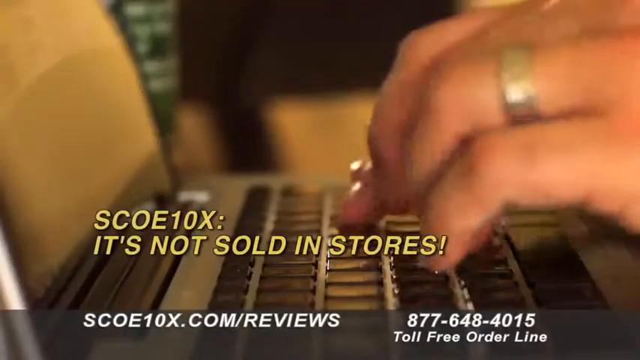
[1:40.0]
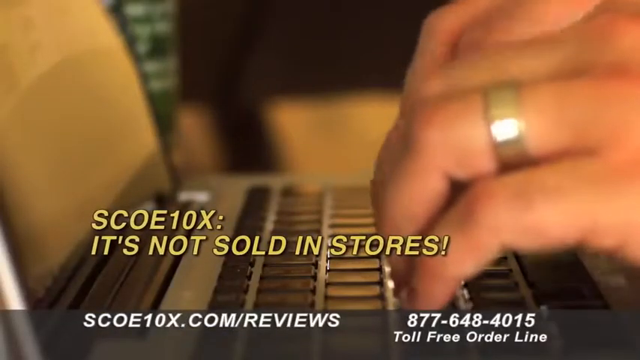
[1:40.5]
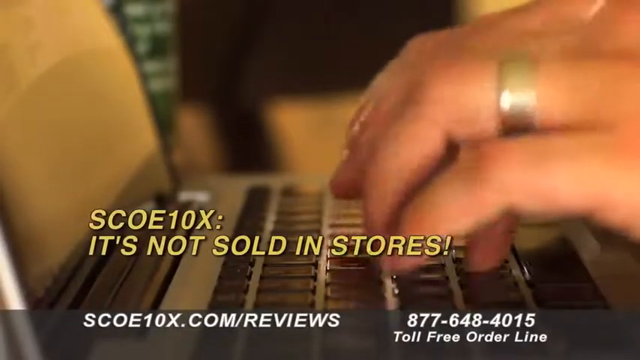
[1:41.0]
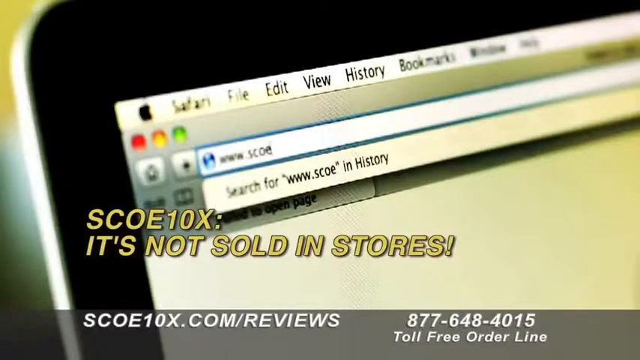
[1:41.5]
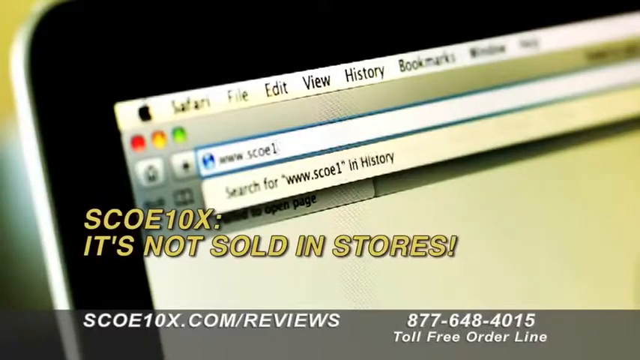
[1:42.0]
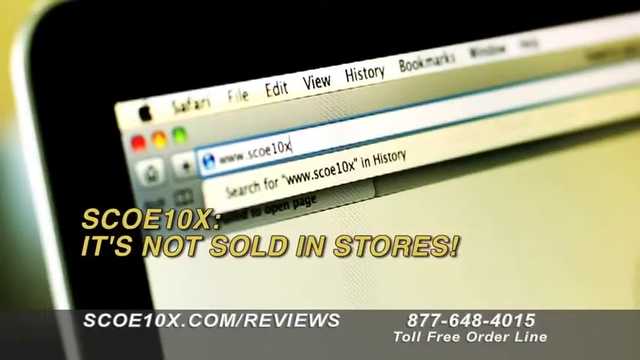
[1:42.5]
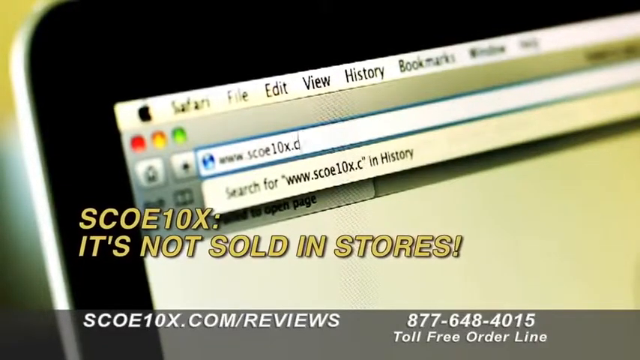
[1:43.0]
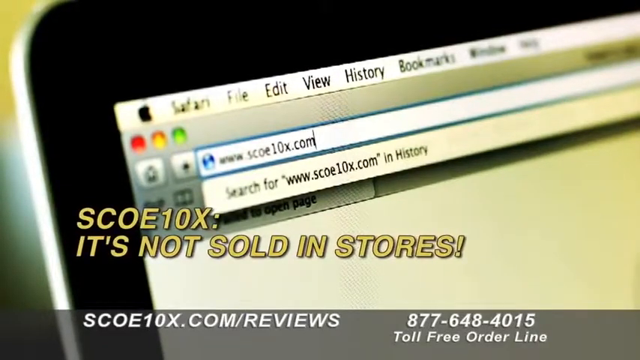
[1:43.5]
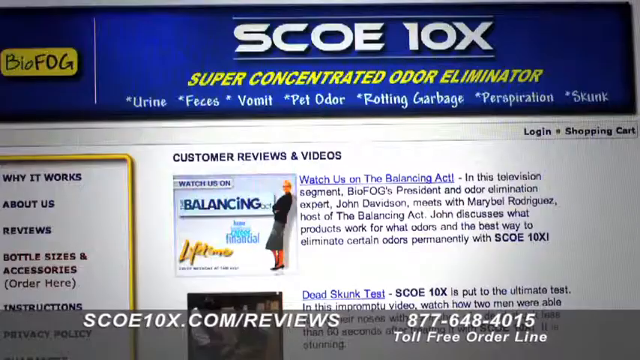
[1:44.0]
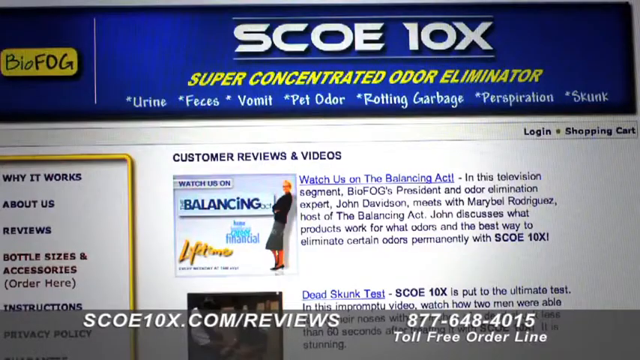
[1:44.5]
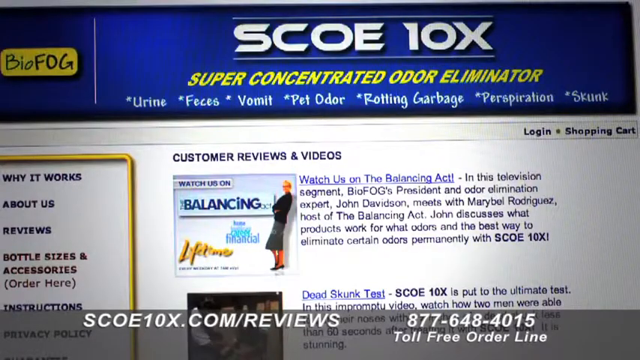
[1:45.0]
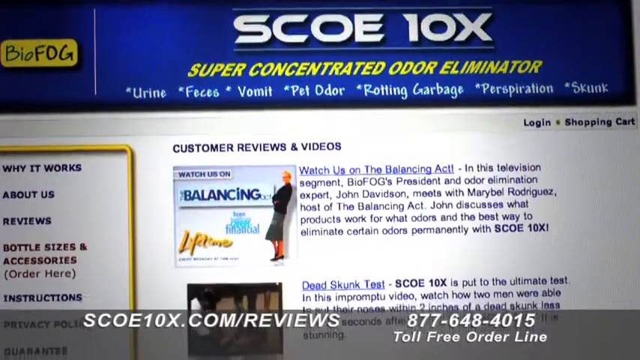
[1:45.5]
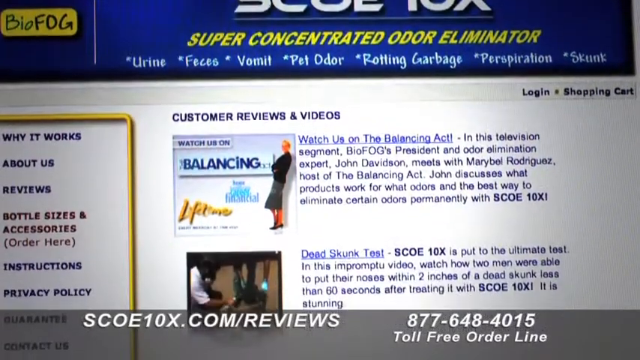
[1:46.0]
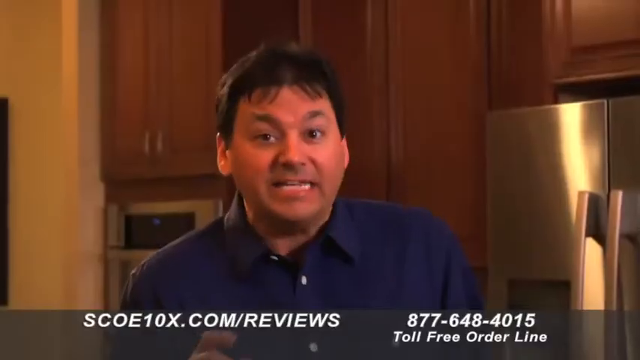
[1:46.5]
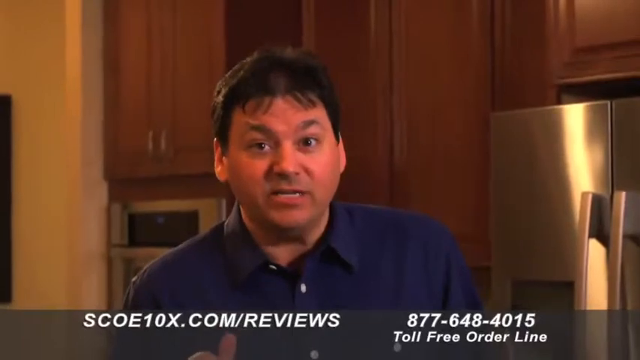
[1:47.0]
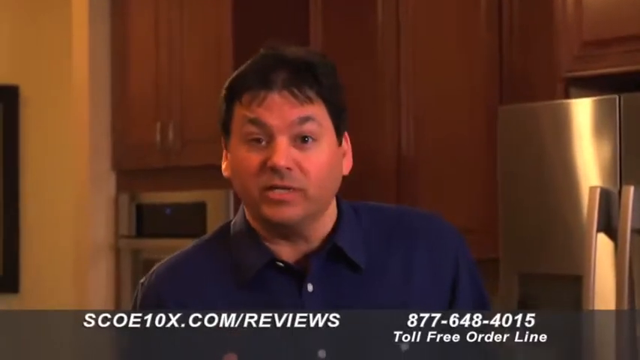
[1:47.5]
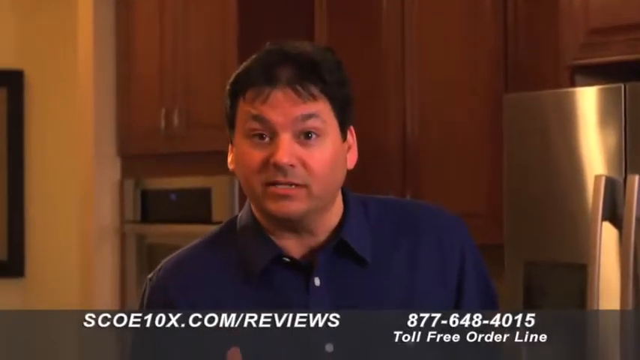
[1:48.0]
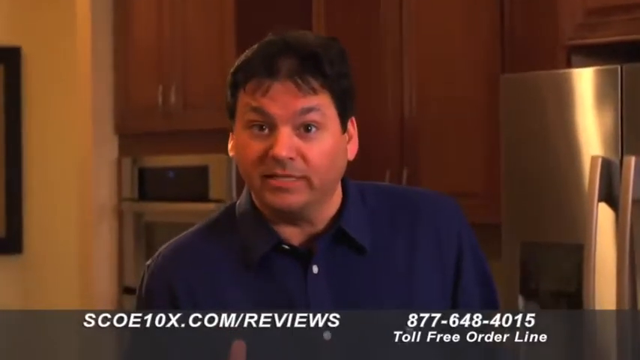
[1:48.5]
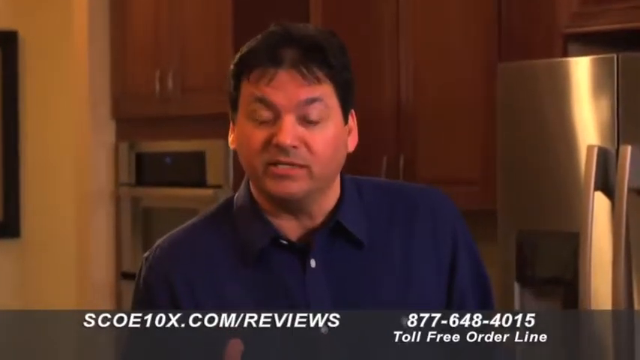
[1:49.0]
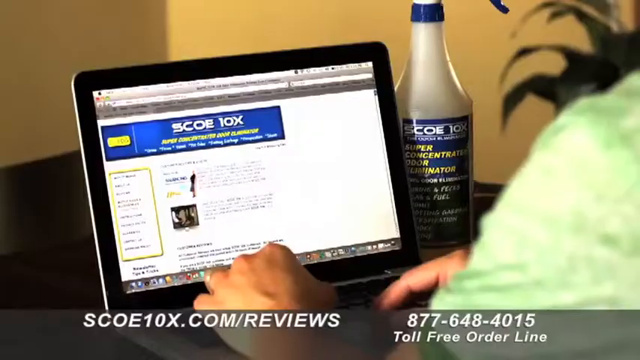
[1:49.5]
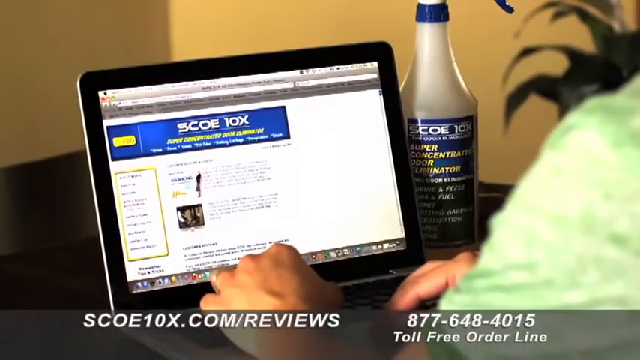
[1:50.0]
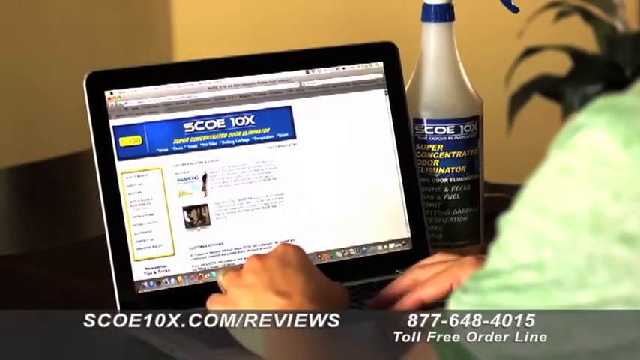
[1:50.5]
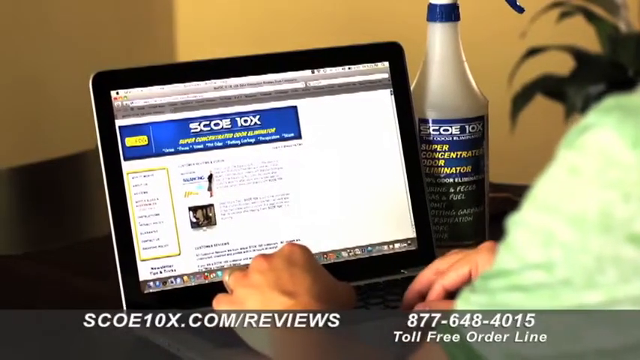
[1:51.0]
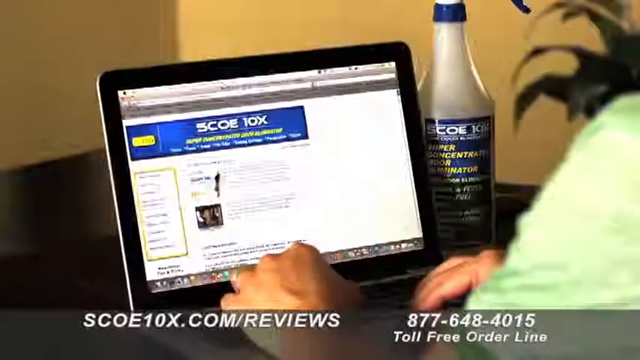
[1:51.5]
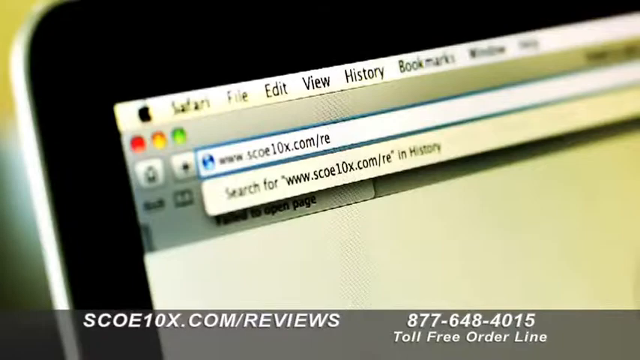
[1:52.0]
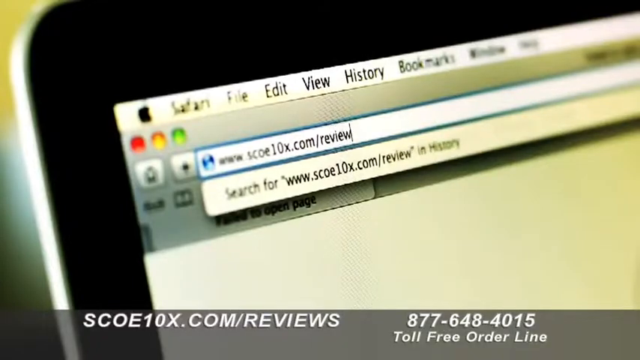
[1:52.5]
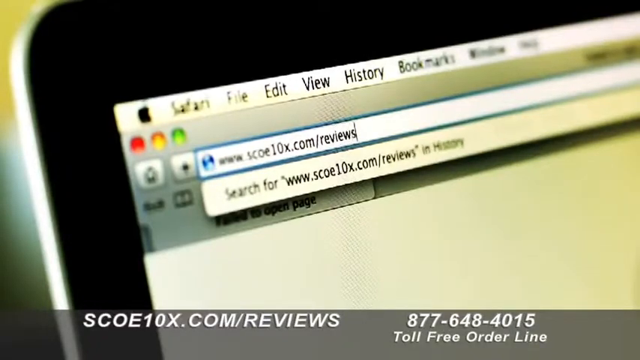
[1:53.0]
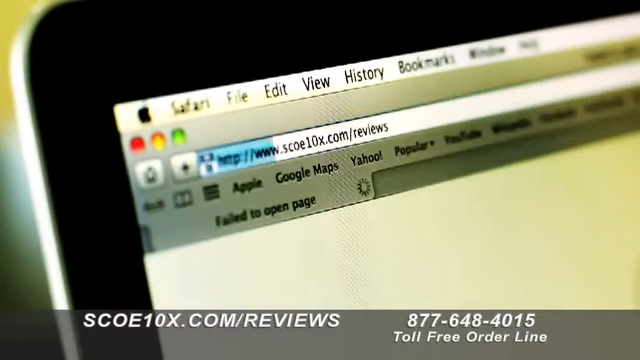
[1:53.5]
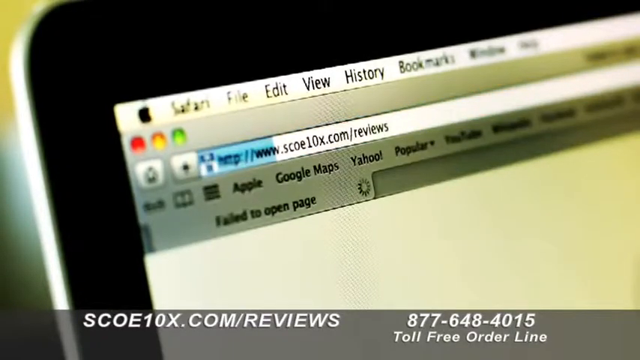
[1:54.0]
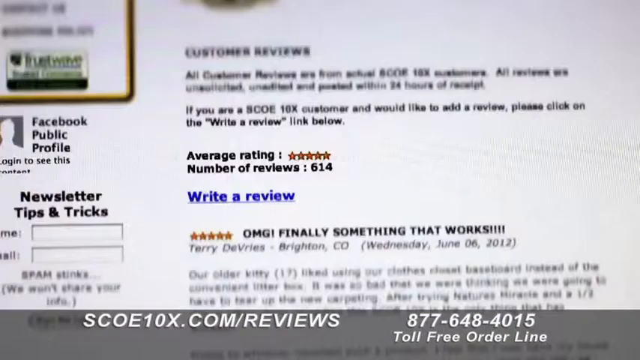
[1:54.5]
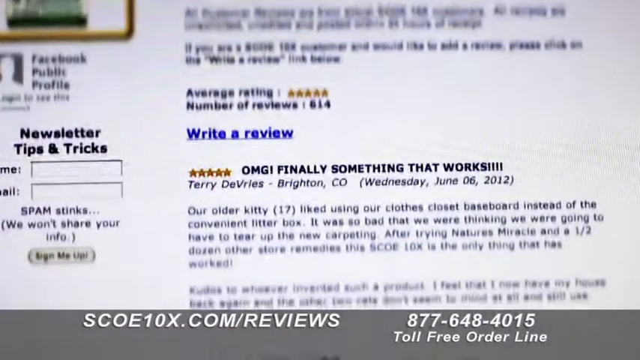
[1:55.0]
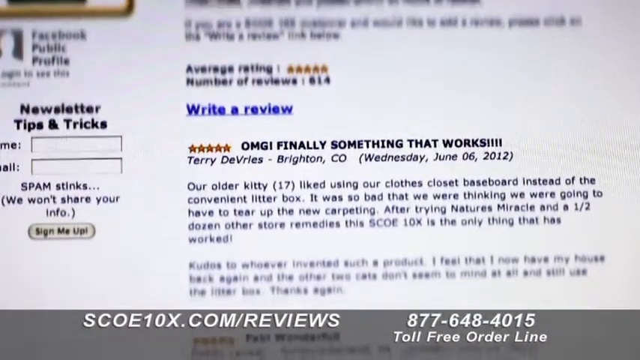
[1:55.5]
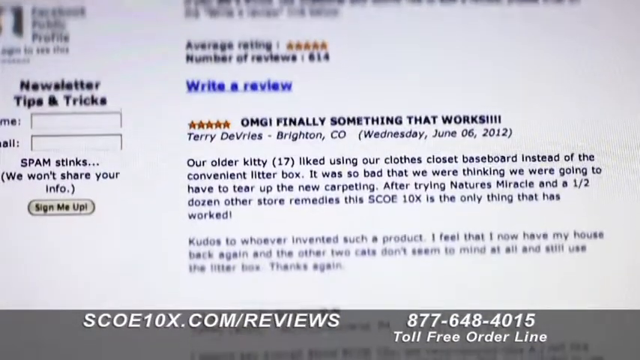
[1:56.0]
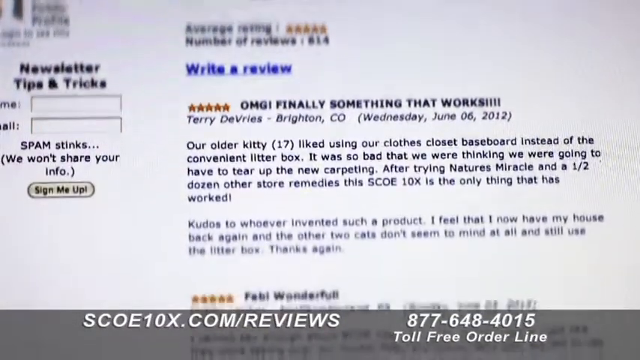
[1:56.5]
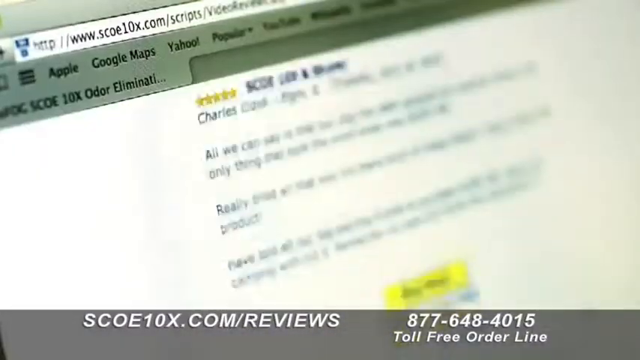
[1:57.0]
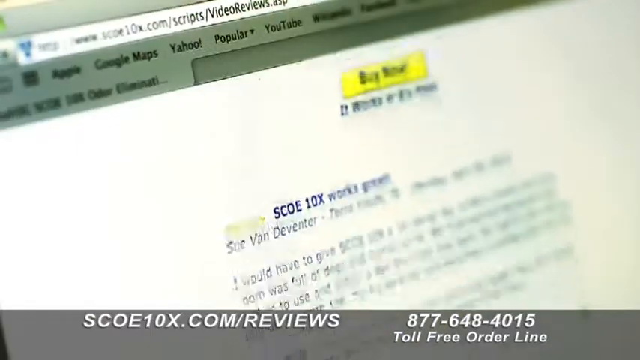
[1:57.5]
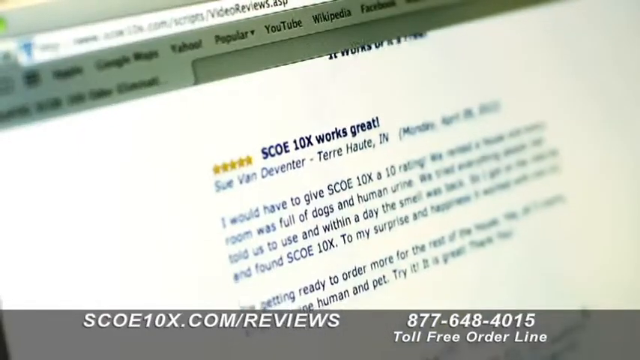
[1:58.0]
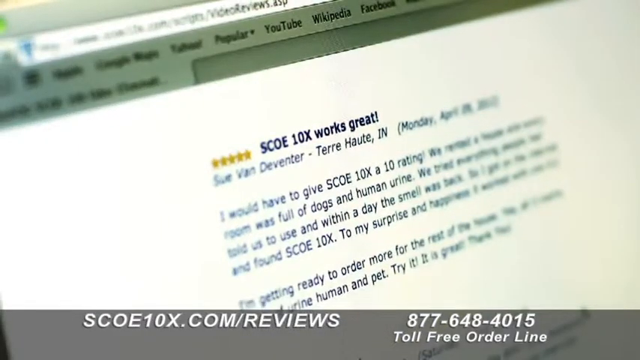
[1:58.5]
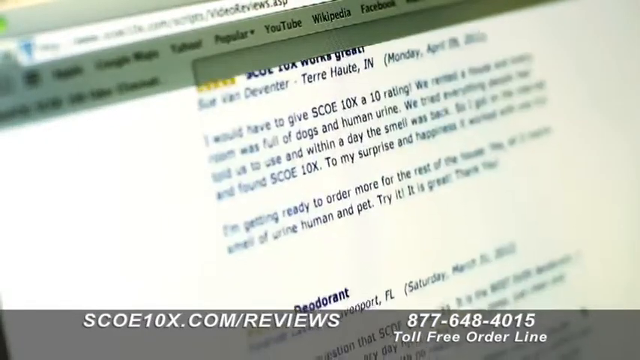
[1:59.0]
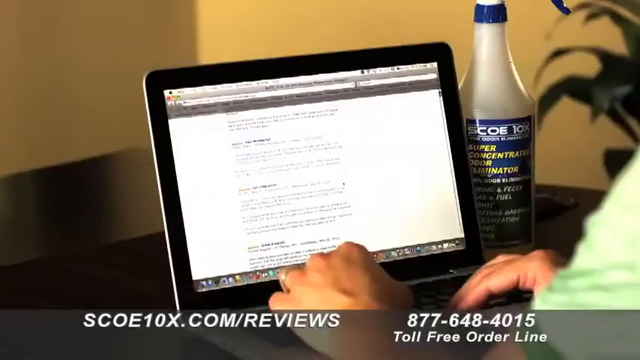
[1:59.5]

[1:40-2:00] Fingers type quickly on a gray laptop with black keys. The fingers appear to belong to a male, as they are quite large, and he is wearing a wedding ring. The next shot shows what the person is typing into a URL box, seemingly the Sko10x website. In the foreground, yellow text says "Sko10x. It's not sold in stores." The video then cuts to what looks like the Sko10x website, a blue and white site with what seem to be customer reviews and videos. The website is scrolled down, and it quickly cuts back to the man from the kitchen, who stares straight at the camera speaking quickly and intently, nodding his head as if to emphasize what he is saying. He blinks, and it cuts to another shot of the person looking at the Sko10x website, this time from the left side, kind of looking over the person's shoulder at the laptop screen. The person seems to kind of scroll with their right hand.